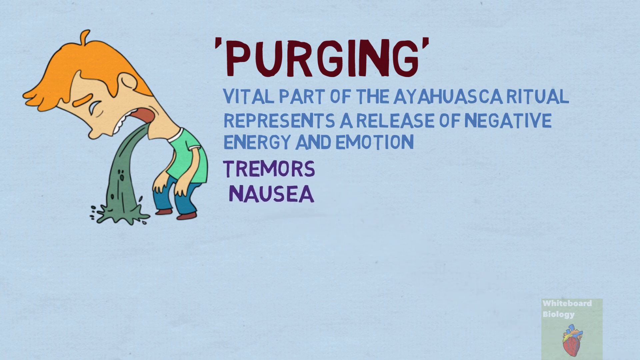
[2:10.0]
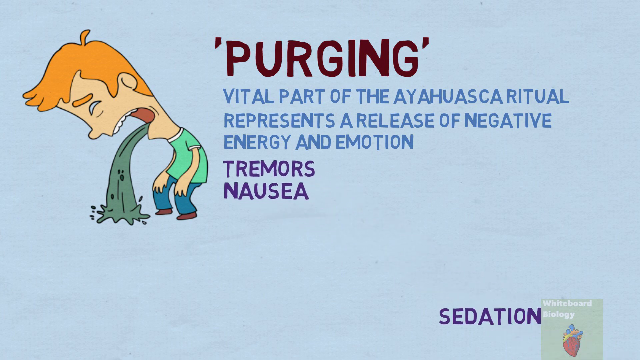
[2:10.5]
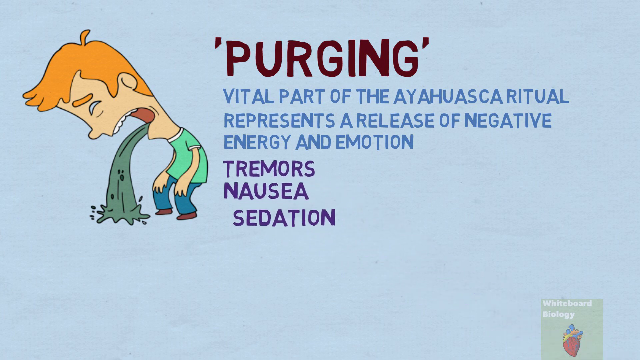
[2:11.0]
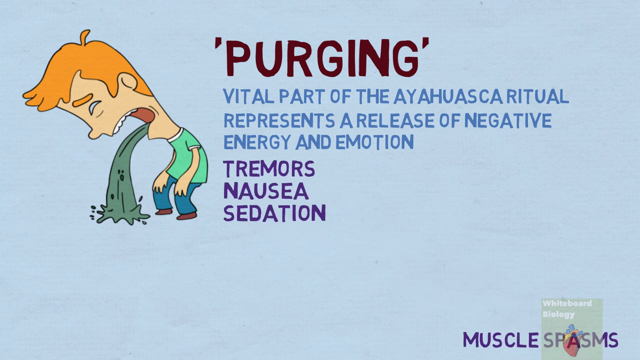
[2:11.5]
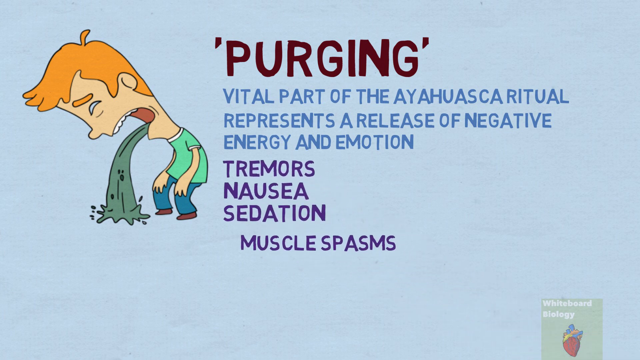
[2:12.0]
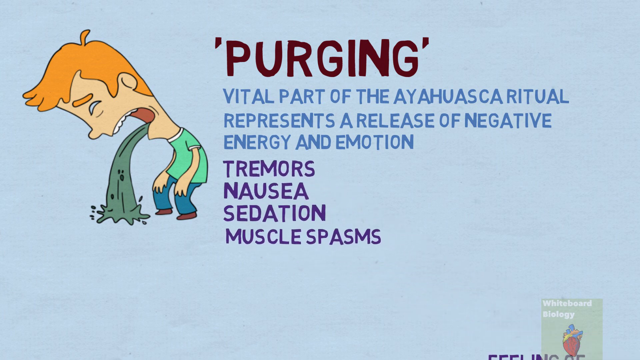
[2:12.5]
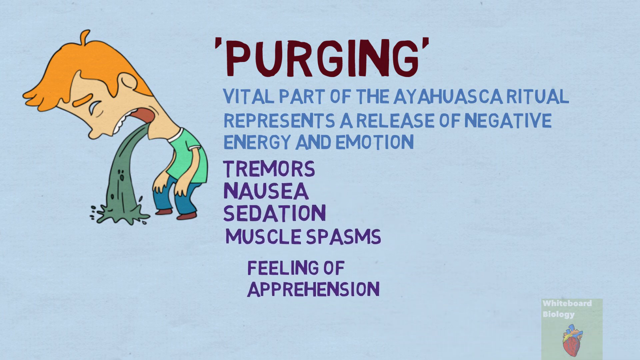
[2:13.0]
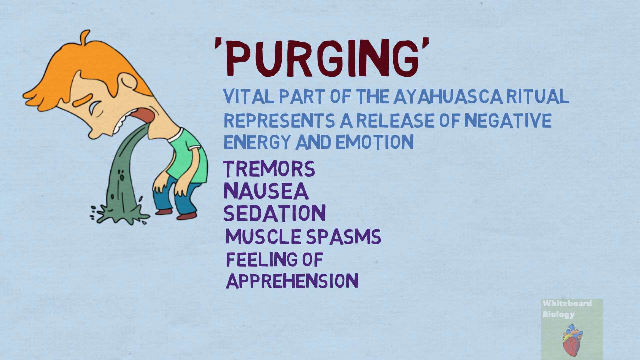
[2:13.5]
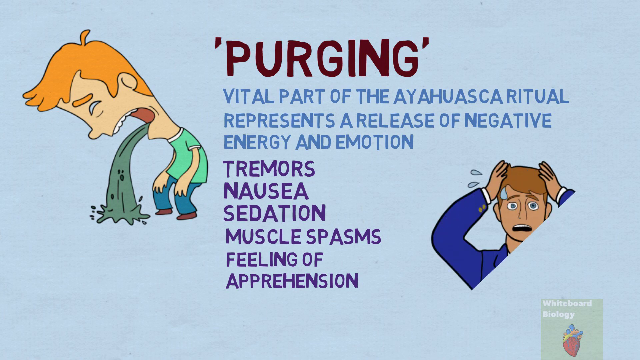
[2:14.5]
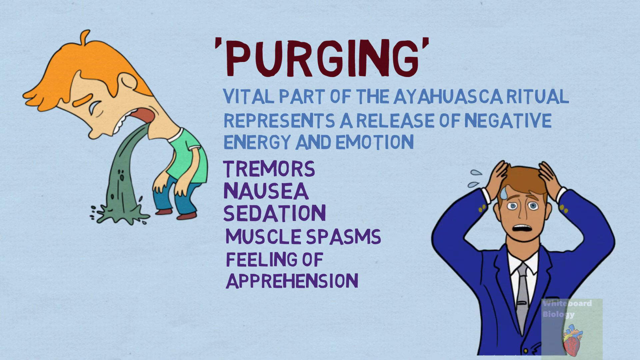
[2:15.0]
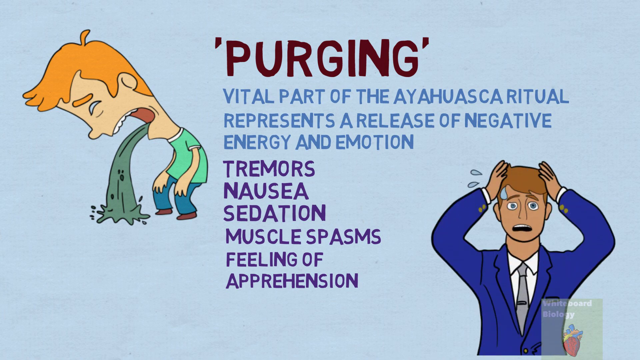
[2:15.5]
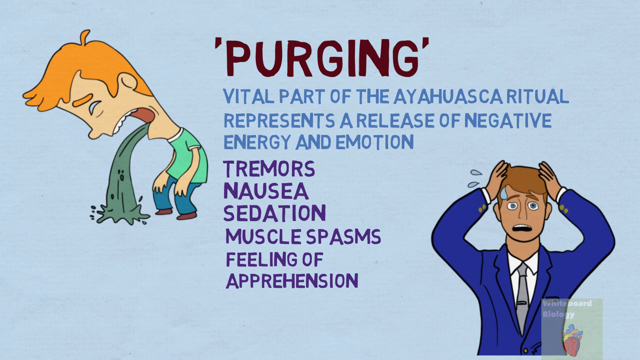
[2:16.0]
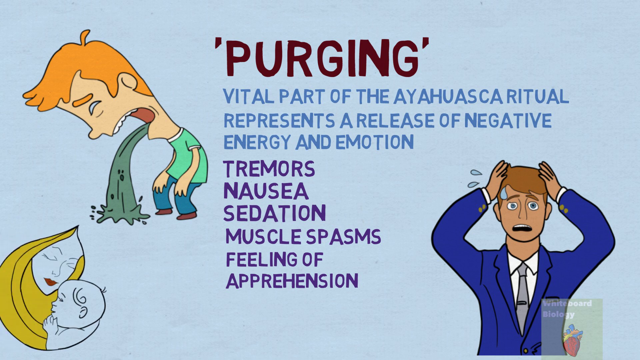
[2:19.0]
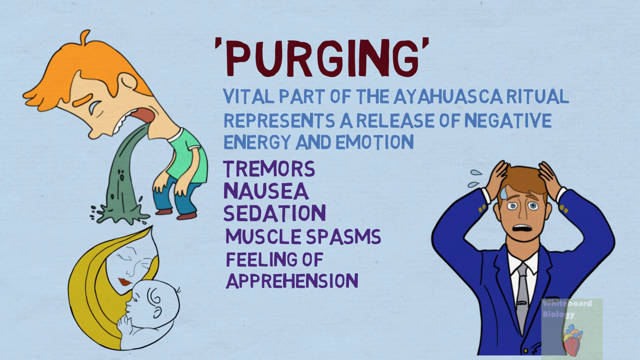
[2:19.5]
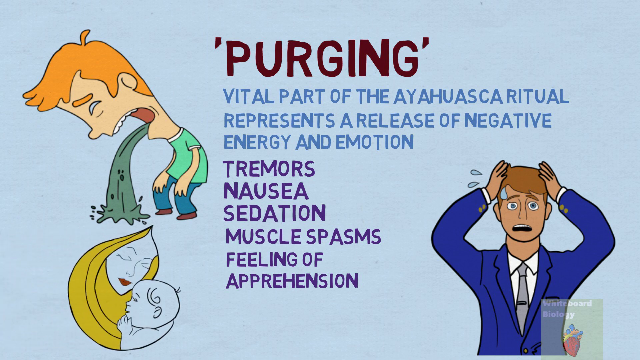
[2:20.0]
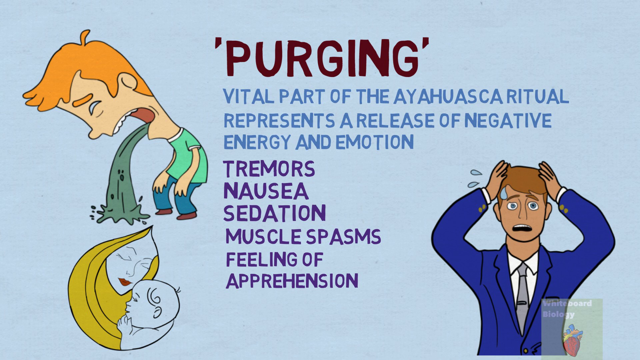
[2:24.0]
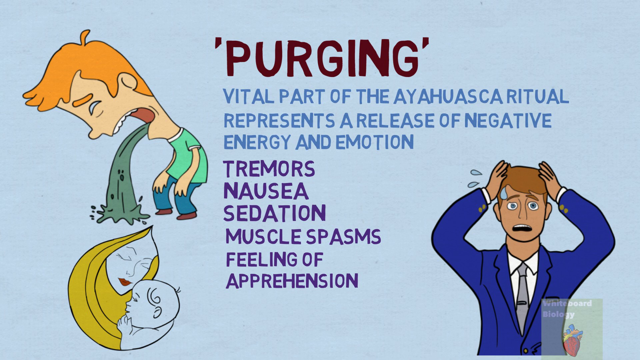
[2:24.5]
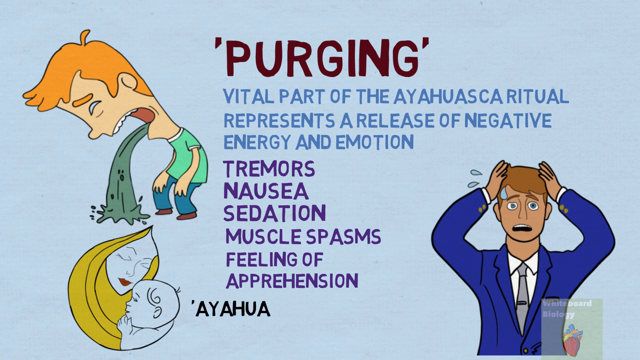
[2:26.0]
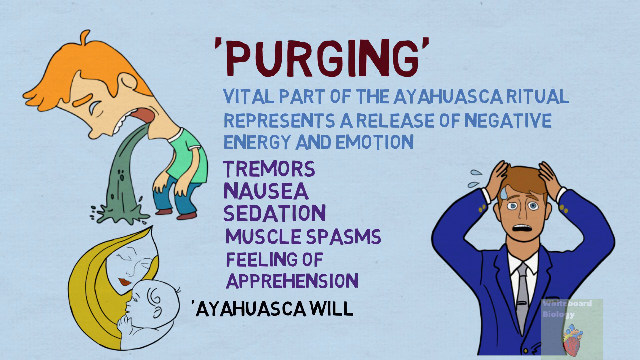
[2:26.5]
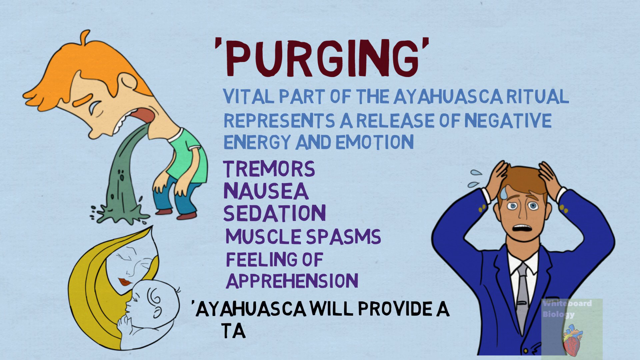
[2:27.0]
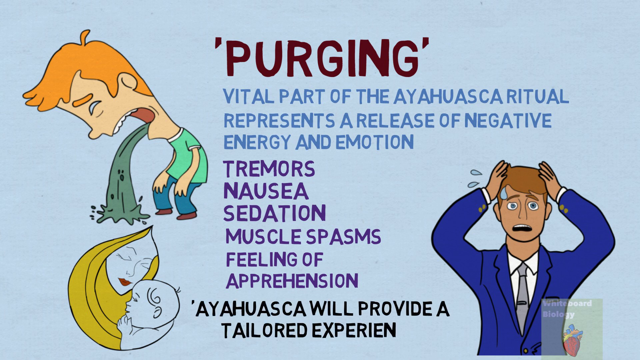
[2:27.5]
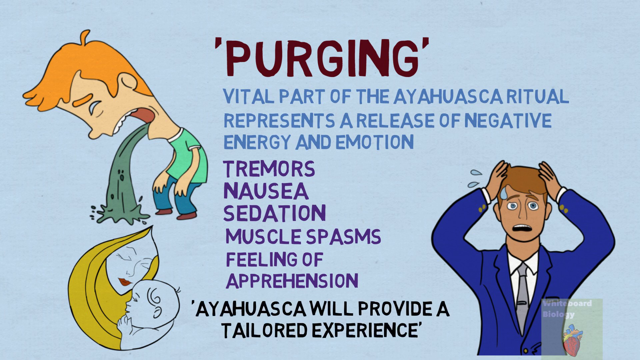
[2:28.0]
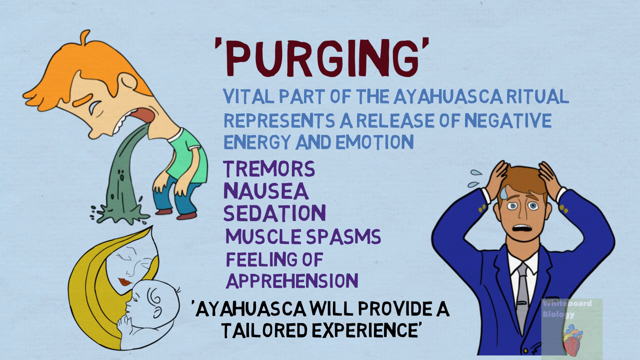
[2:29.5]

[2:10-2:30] Some people are shown holding their hands.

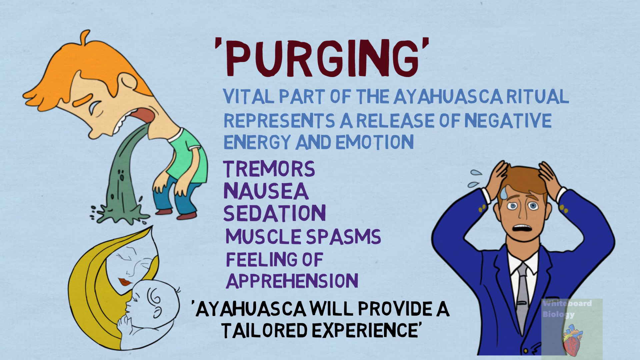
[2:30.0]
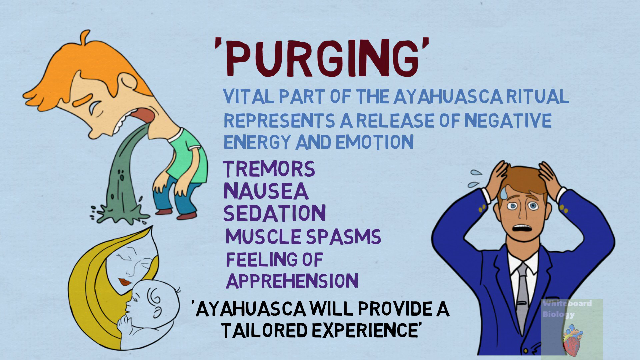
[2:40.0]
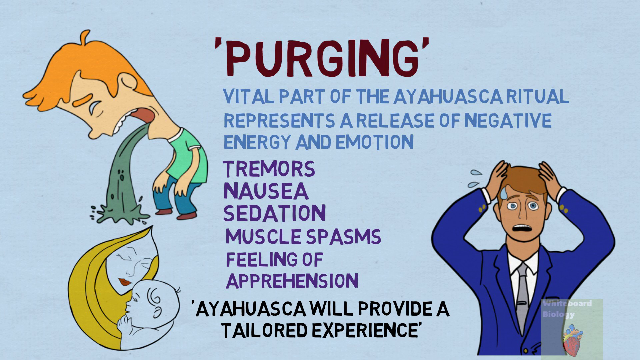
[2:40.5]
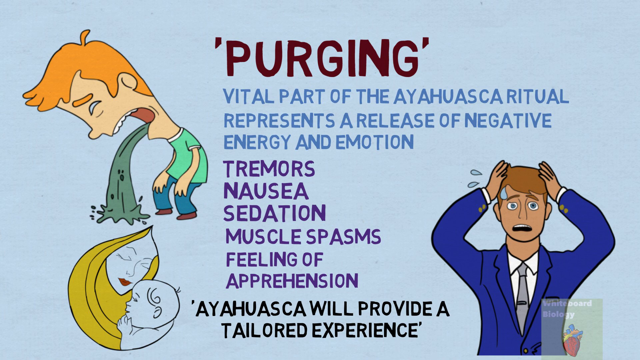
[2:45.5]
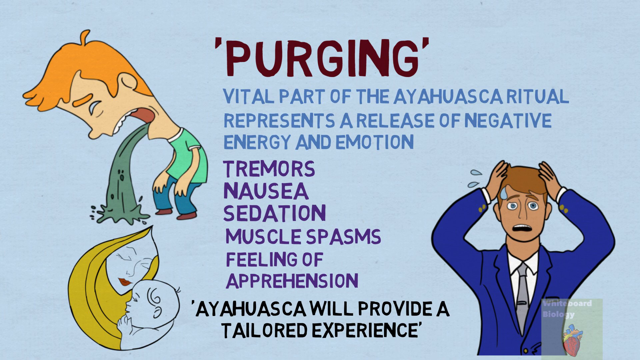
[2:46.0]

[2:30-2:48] A cartoon animation shows a man in a blue suit, a white t-shirt and a gray tie. He looks like he is crying, with a splash of water around his head, and he puts both hands on his head. A woman carrying a baby also appears in cartoon animation.